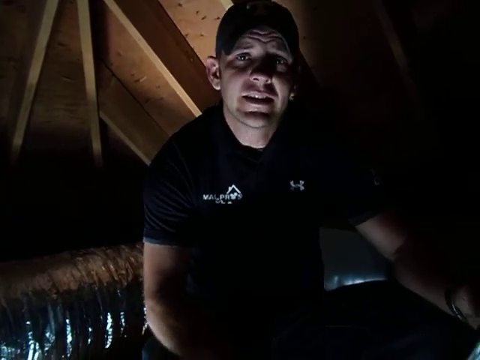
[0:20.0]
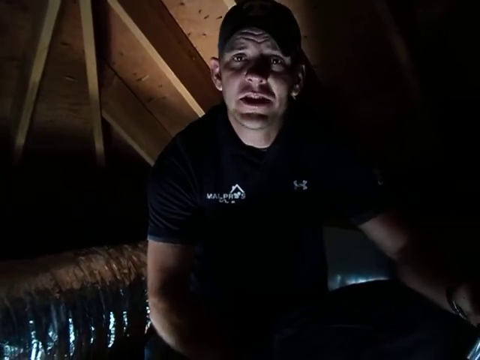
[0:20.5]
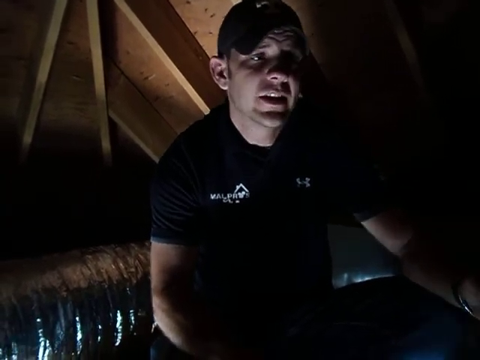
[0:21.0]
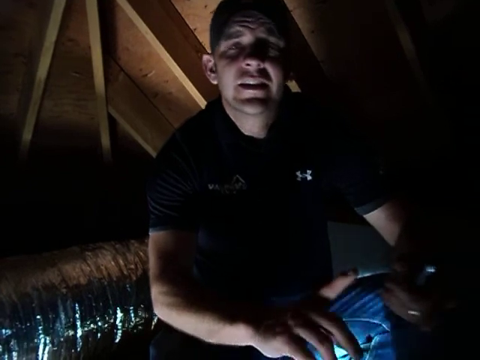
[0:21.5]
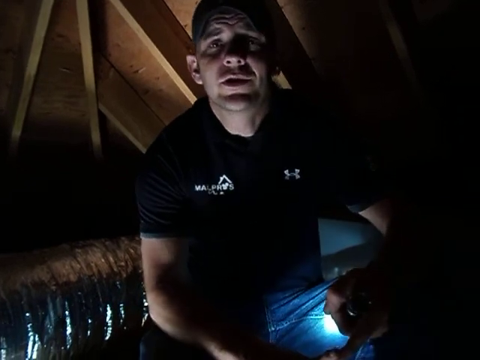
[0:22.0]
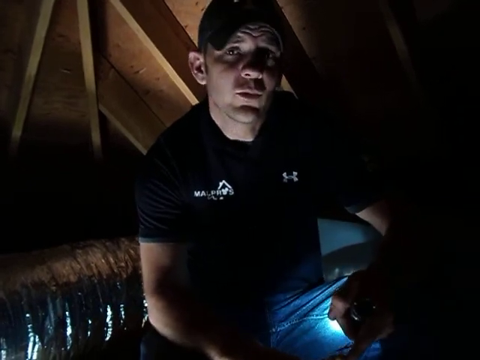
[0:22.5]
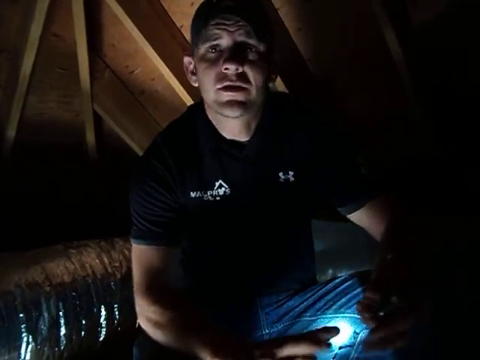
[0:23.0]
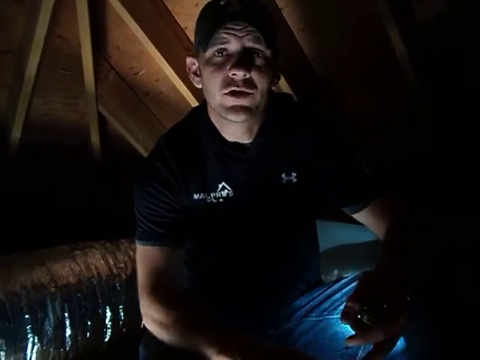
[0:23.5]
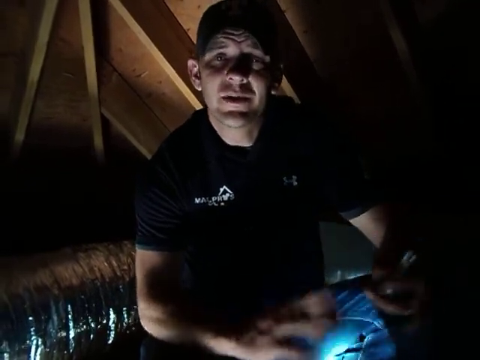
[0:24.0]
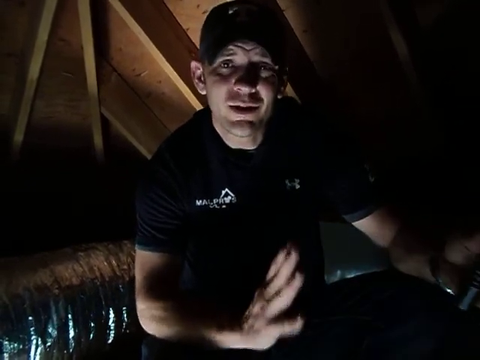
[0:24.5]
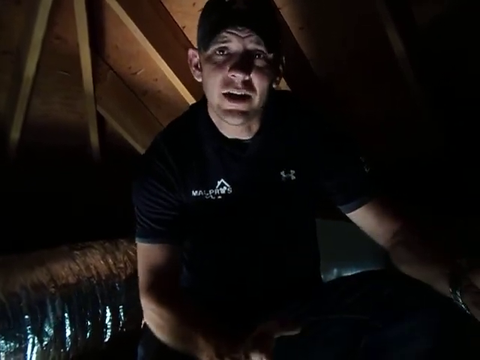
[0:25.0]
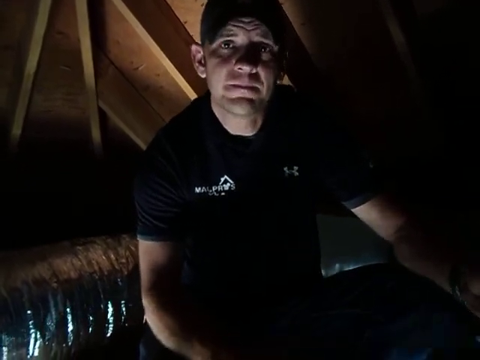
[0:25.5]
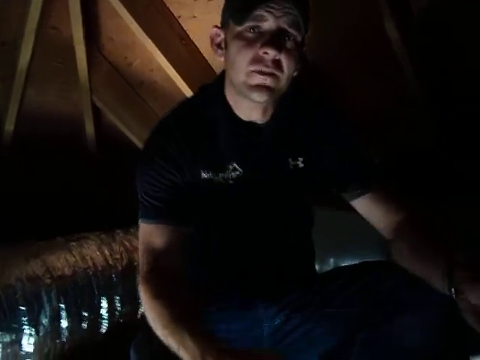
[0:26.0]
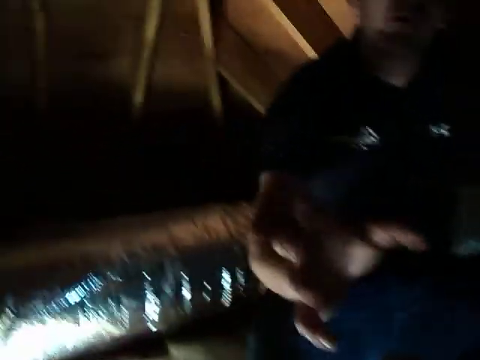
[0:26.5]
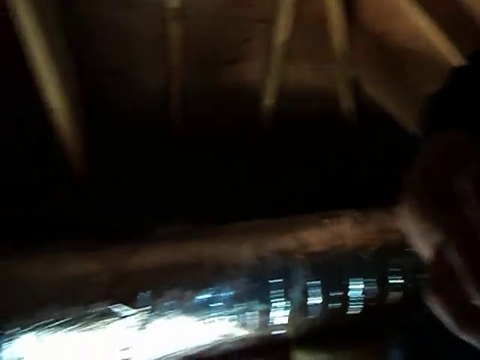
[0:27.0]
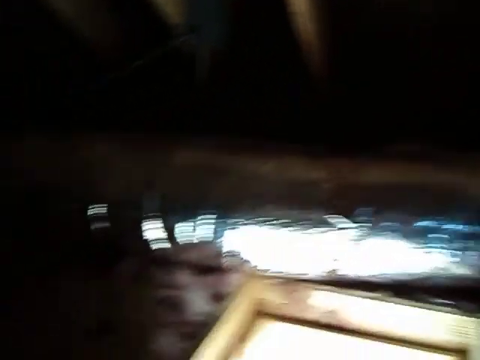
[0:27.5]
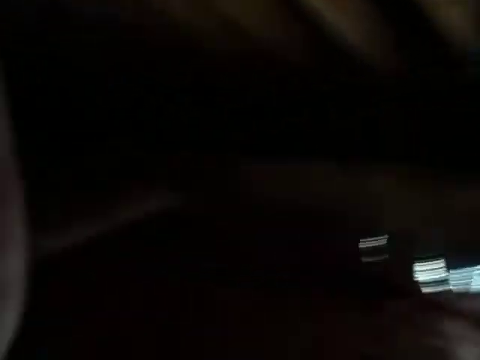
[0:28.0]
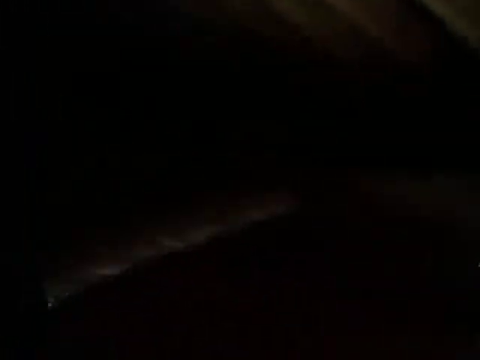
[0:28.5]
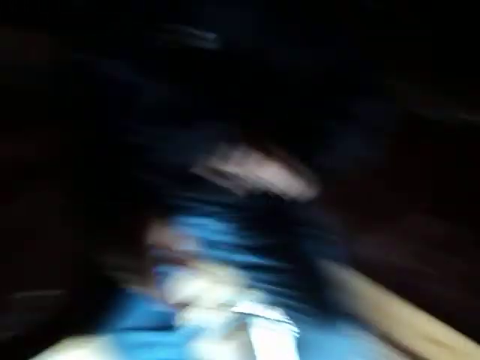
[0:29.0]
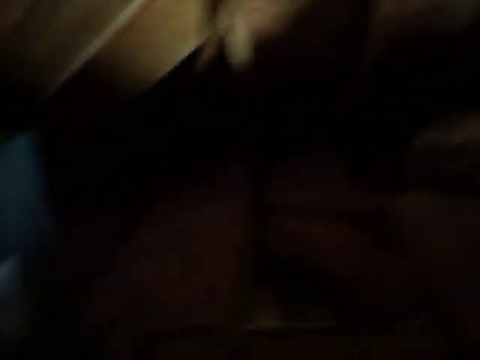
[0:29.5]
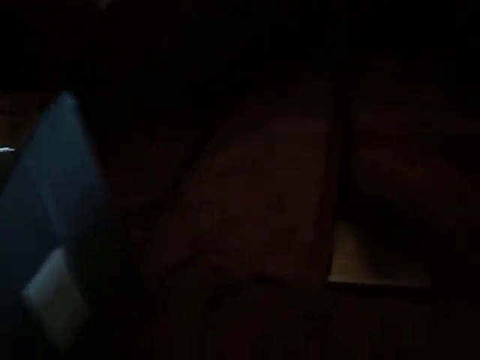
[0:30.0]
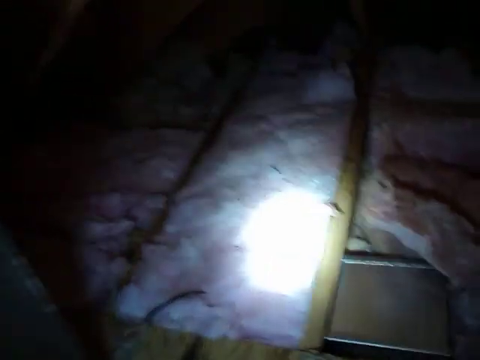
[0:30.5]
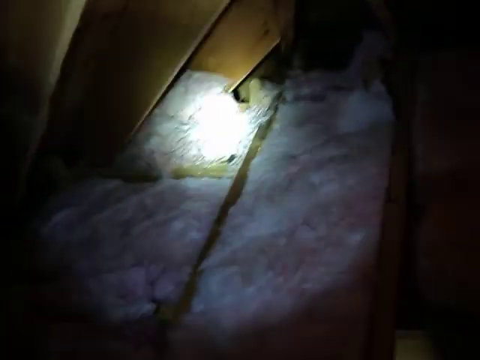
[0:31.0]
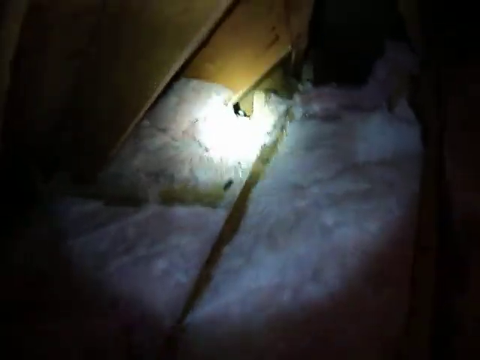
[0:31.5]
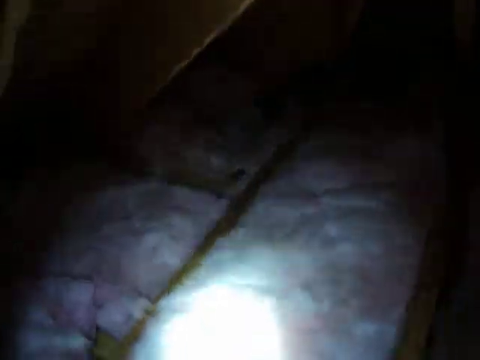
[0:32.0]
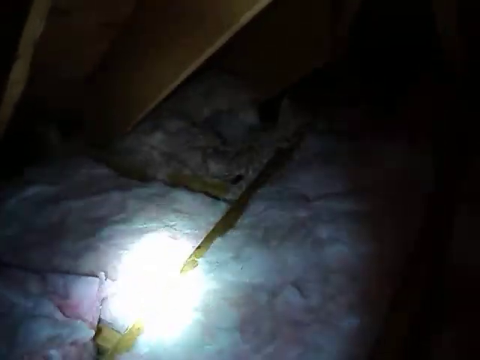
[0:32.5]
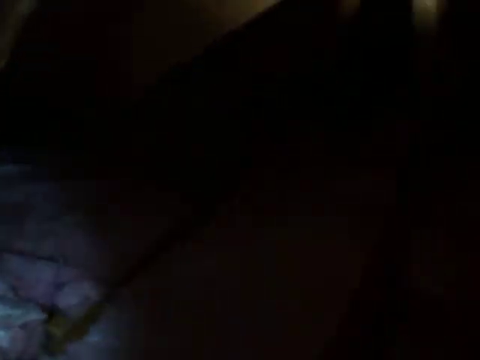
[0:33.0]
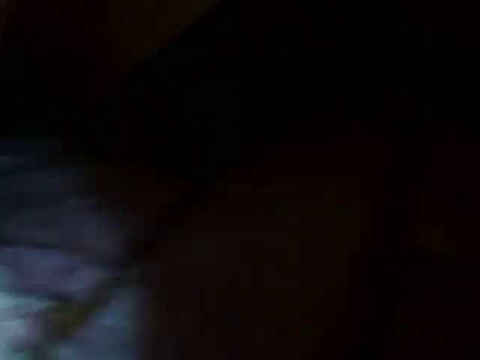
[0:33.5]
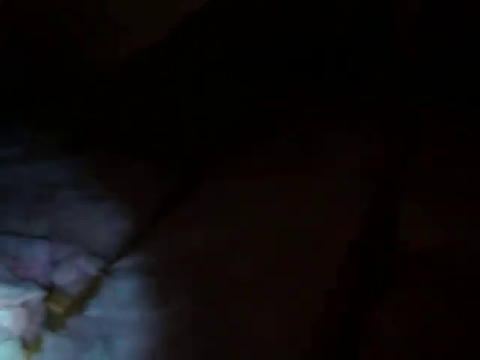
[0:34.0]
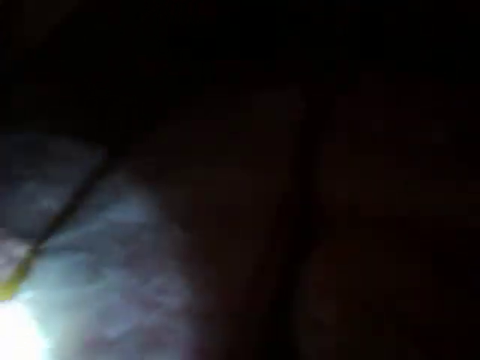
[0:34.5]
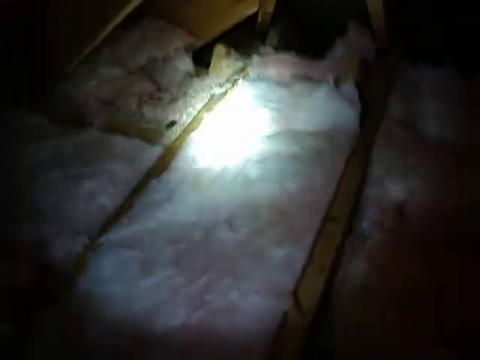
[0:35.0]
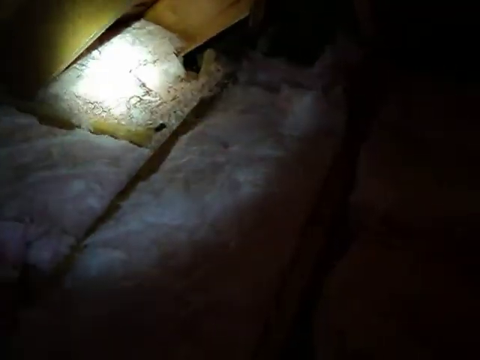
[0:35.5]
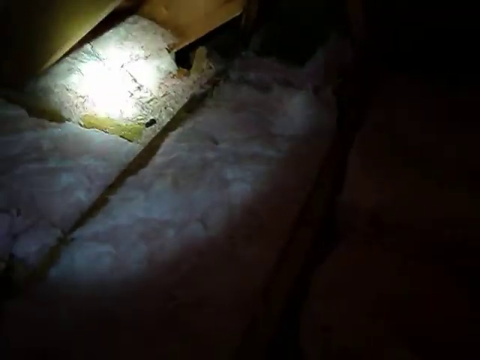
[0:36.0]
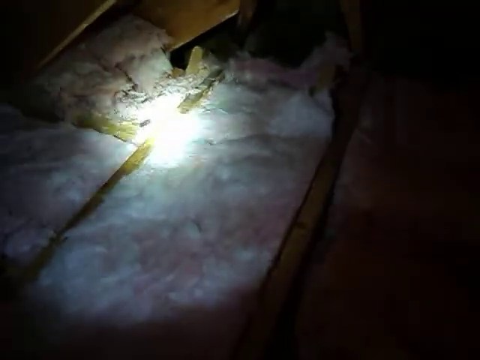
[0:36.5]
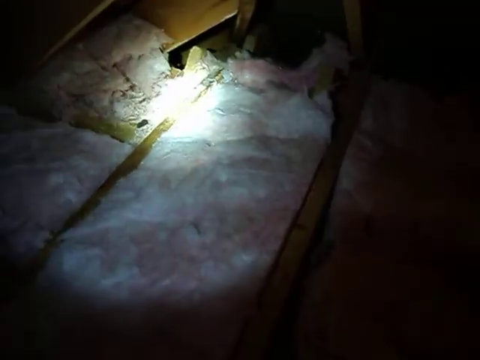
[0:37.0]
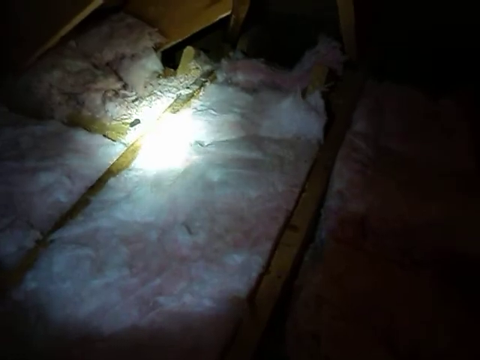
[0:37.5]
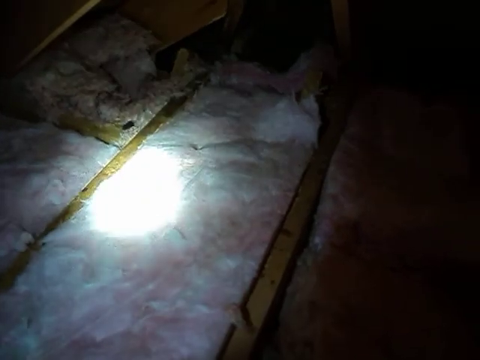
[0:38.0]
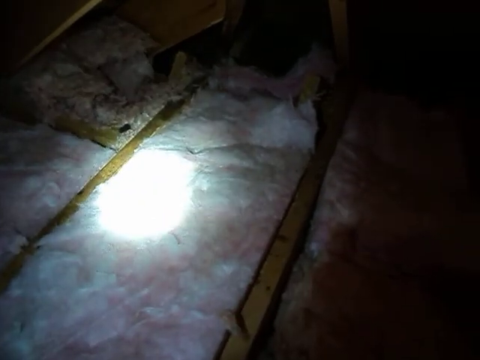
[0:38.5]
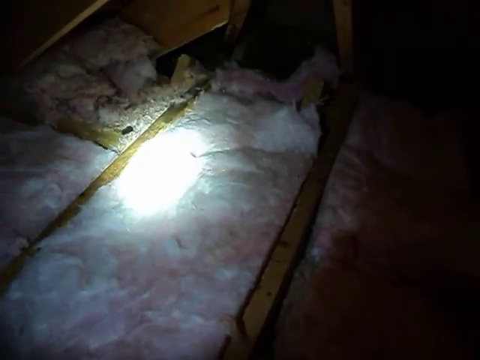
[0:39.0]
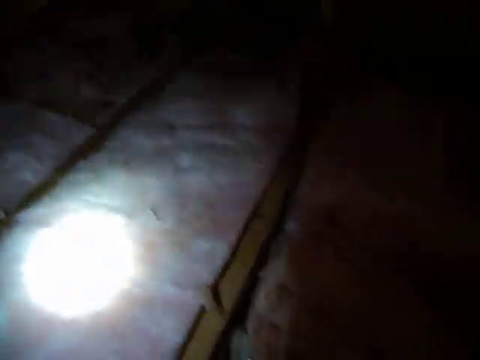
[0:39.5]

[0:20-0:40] A man is in what looks to be an attic, wearing a short-sleeved shirt with an Under Armour logo. The attic has very little lighting, so there is just a little light on his face, and his forehead is very wrinkly. The joists of the ceiling and the underlayment of the decking are visible. As he talks he somewhat turns his head, then brings his hands together; he is holding a flashlight aimed down toward his jeans. He speaks and lifts his hands up, and the flashlight in his left hand moves. The camera seems to be moving, almost as though someone is holding it, shaking a little. Then the camera starts to turn down, looks down, and sweeps to the left, now facing a different direction in the attic, where pink batt insulation is visible between the floor joists.